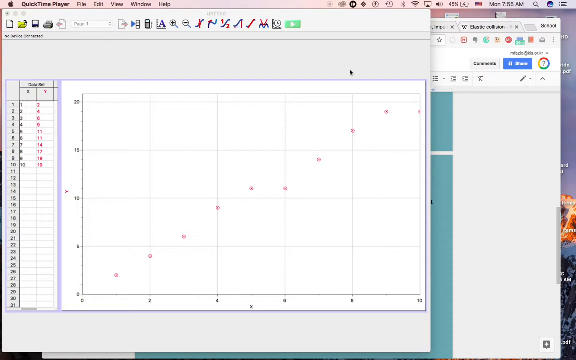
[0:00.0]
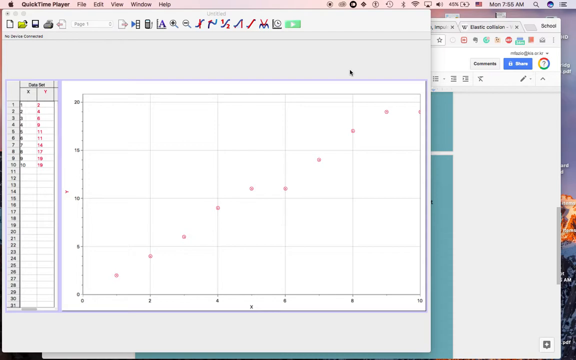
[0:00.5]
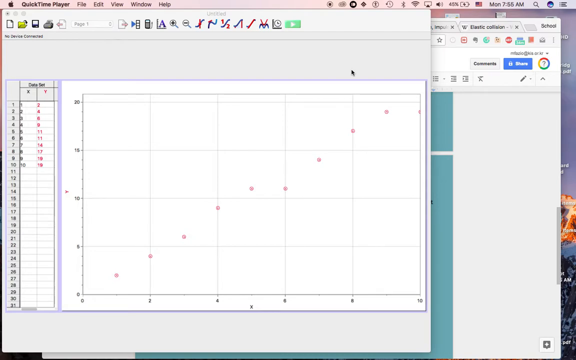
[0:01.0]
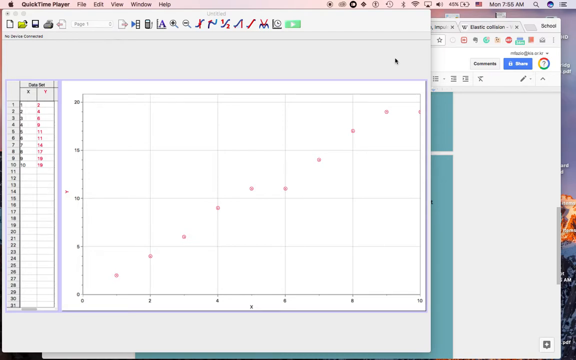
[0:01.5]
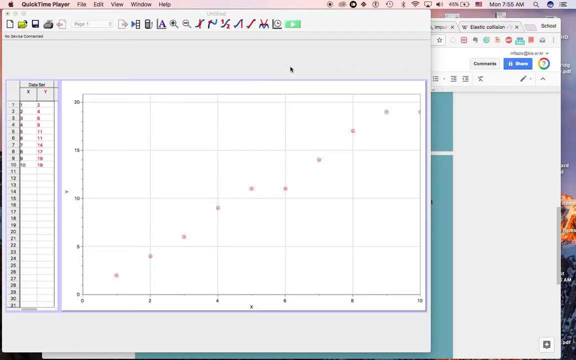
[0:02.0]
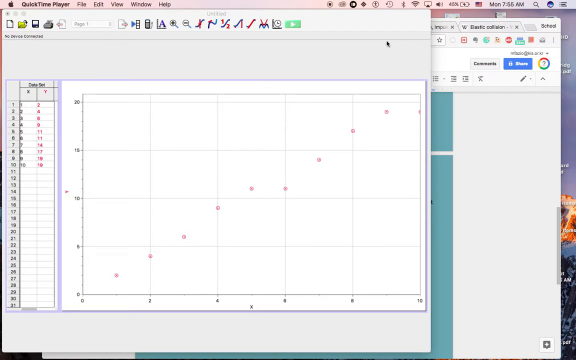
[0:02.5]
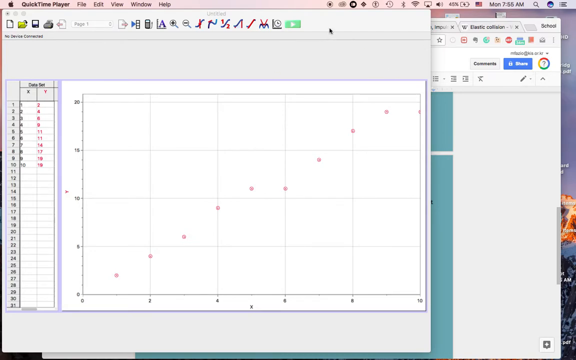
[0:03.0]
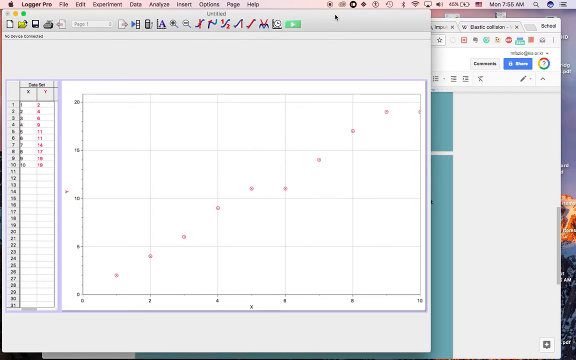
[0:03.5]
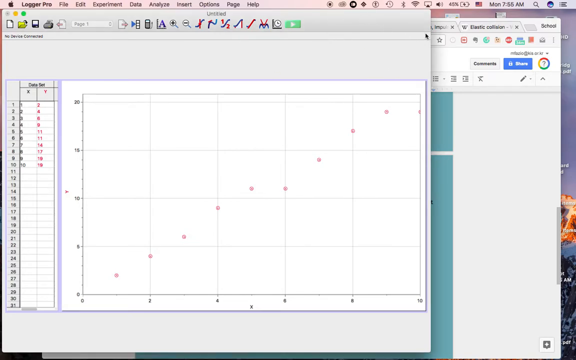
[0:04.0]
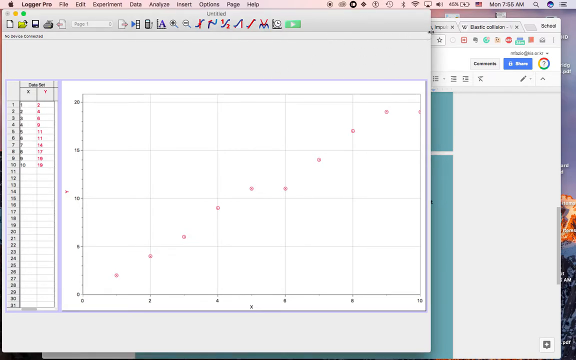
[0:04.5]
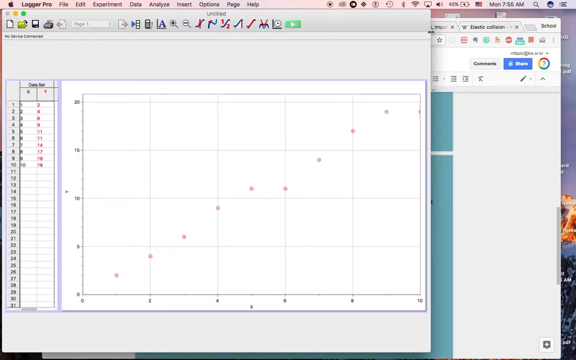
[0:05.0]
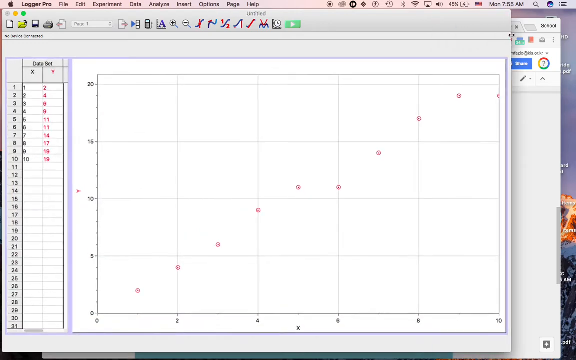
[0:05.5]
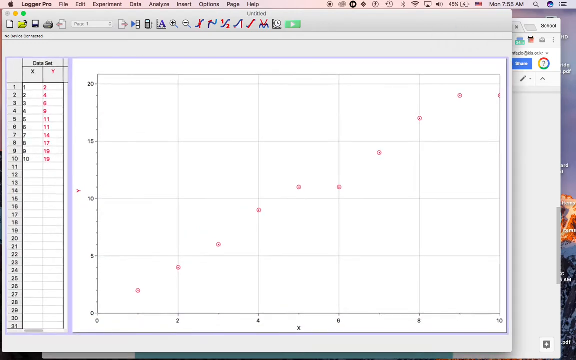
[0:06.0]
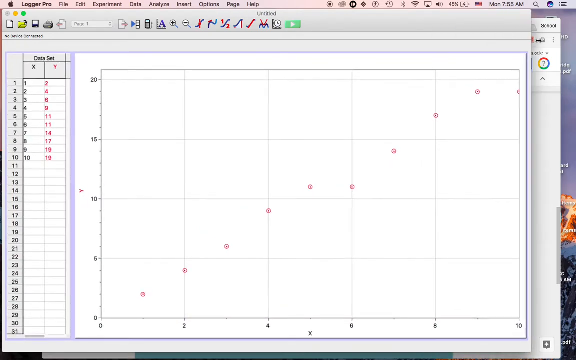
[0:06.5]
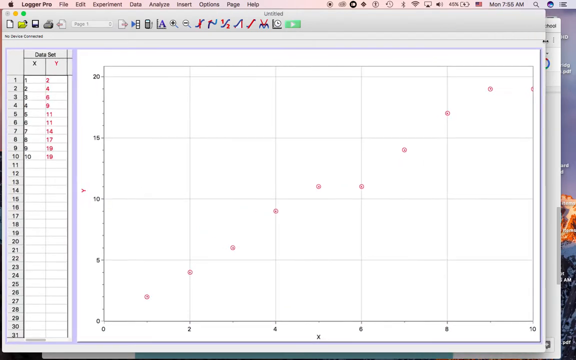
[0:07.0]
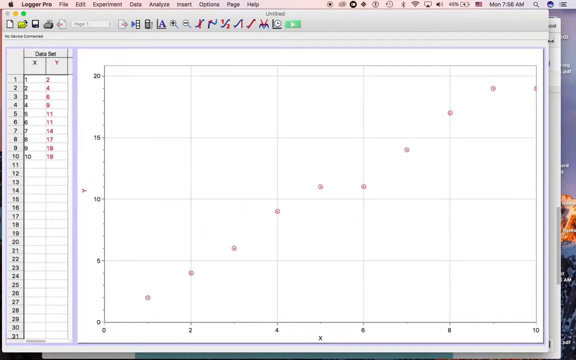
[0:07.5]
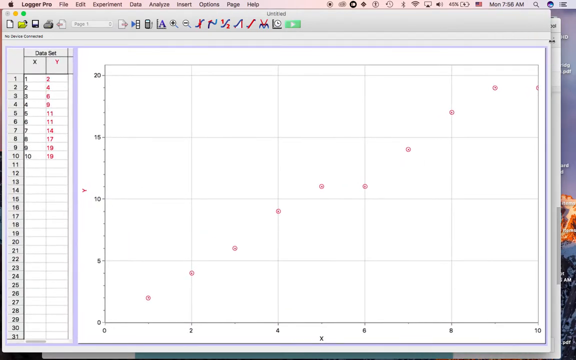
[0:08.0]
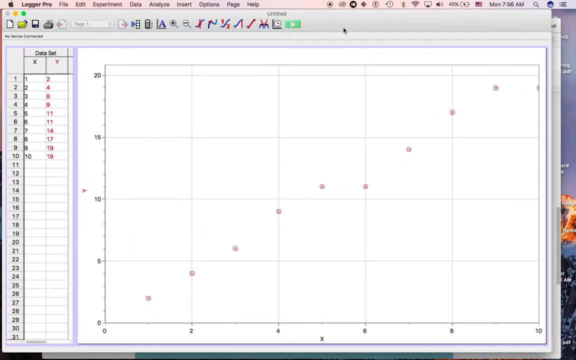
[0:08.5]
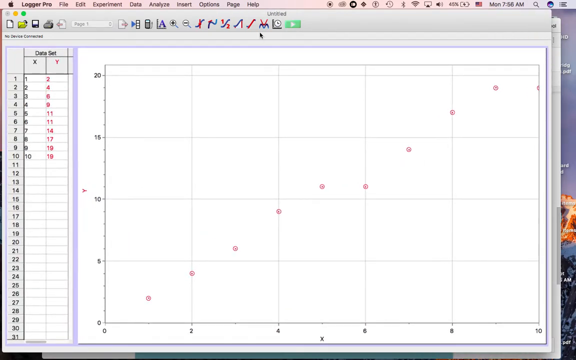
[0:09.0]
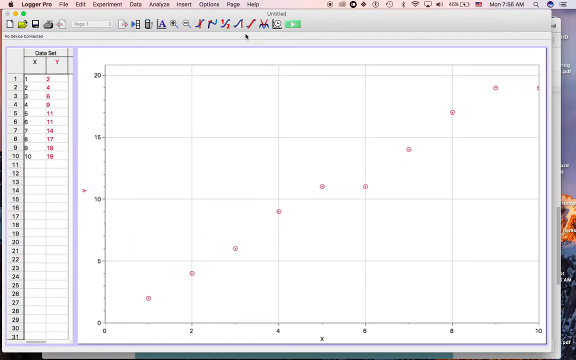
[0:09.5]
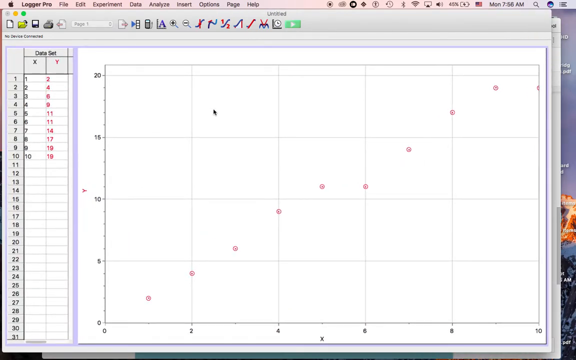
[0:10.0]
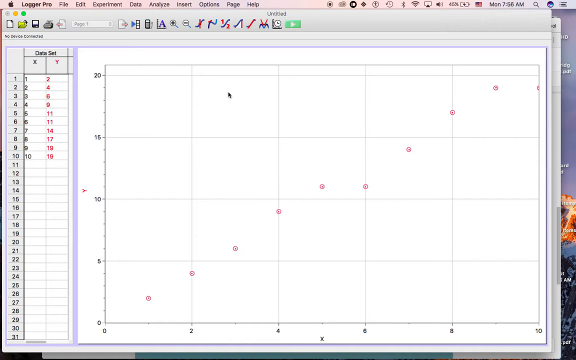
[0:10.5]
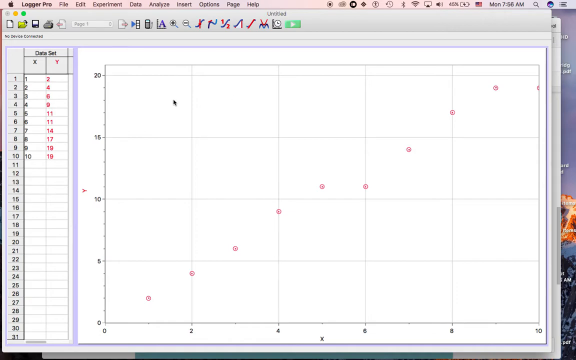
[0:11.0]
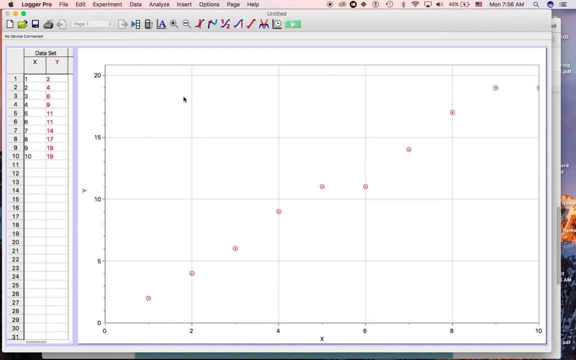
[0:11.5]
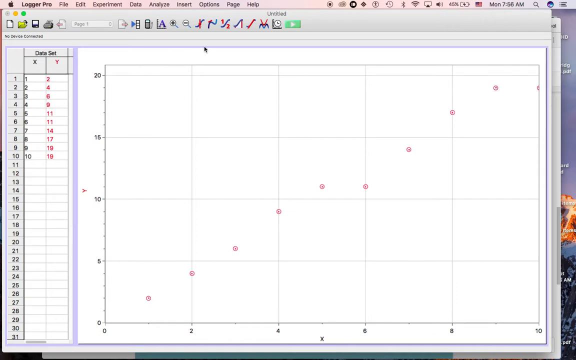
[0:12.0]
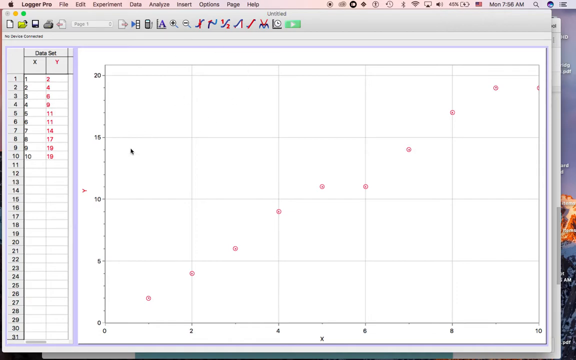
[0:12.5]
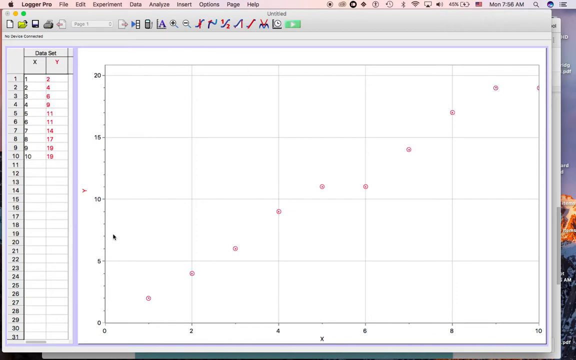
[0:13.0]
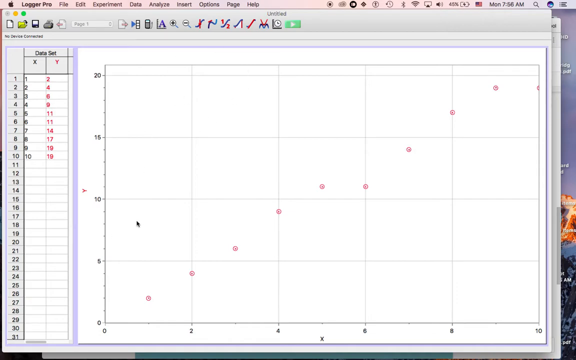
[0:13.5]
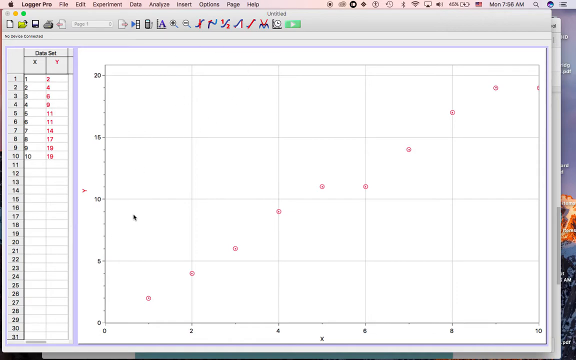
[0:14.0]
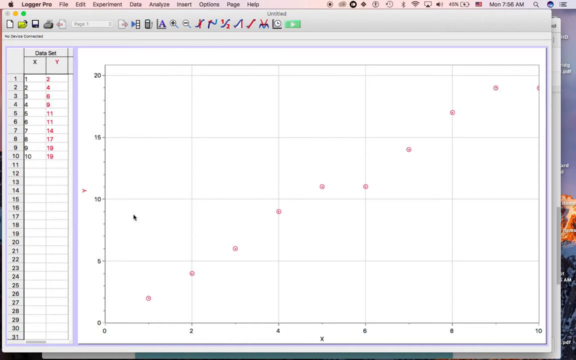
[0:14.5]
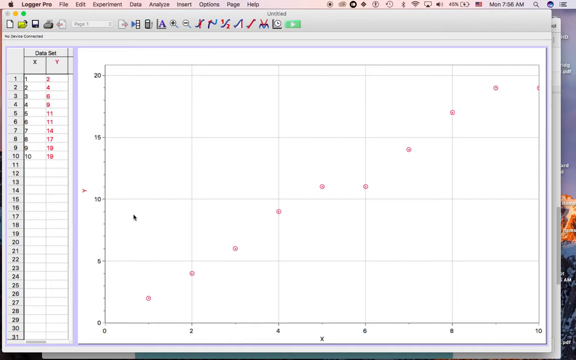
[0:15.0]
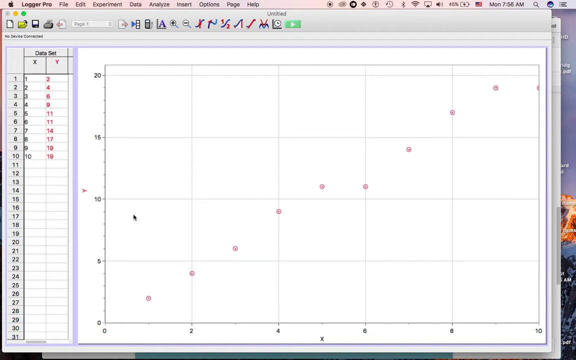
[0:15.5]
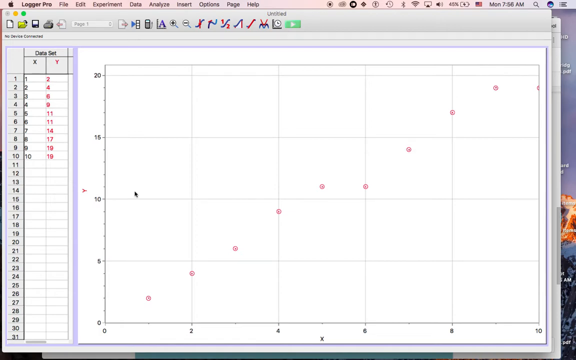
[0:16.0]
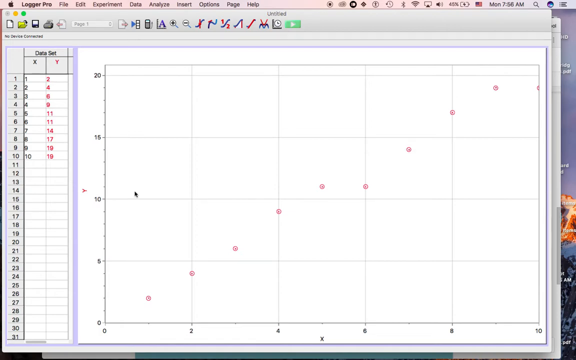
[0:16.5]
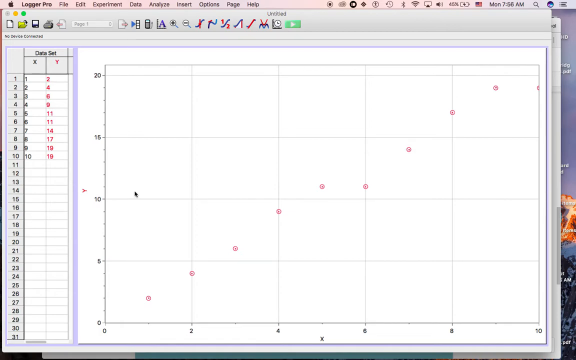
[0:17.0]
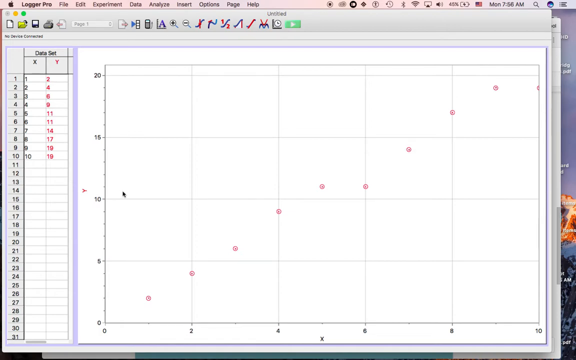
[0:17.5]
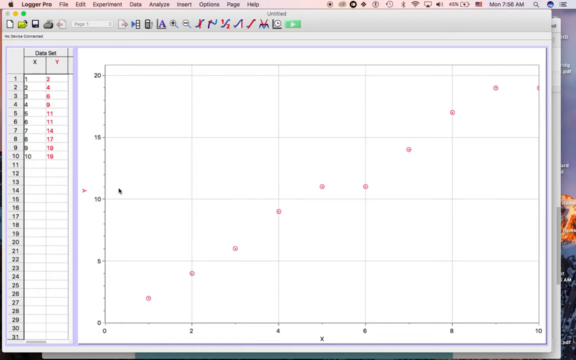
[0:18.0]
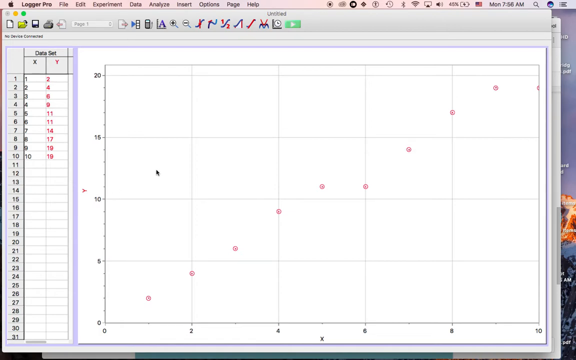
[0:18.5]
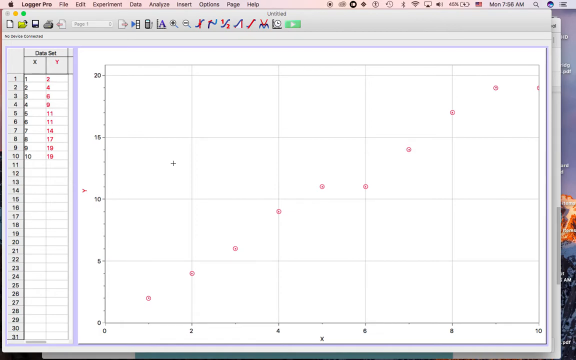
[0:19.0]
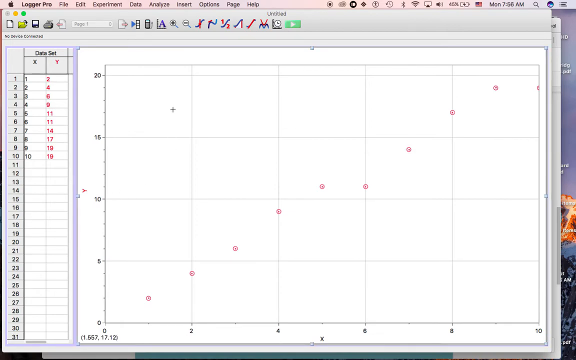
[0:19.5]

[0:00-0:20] An Apple/Mac computer screen is open, with the time in the top right corner reading 7:55 AM on Monday. A large window is open on the left side, covering most of the screen. To the left there are numbers, something like two rows of X and Y values. In the middle is a graph with numbers to its left and bottom, and light pink dots are spread across it in an upward pattern, starting from the bottom left corner and rising toward the right. The mouse pointer goes to the upper area and drags the window to the right side to make it larger. The window's title, at the top center, is "Untitled". The pointer moves to the center and kind of hovers over the settings area, then goes down to the left into the top left area of the graph, moves around, and goes downward to the bottom left area of the graph.